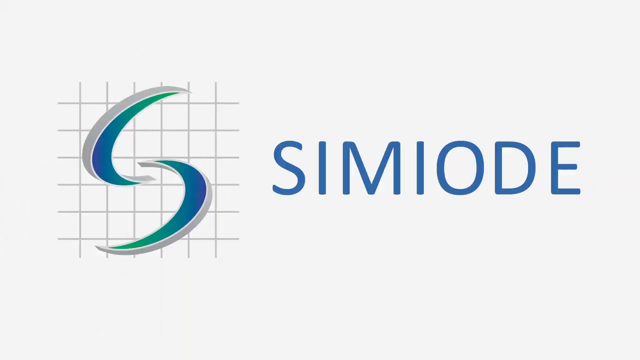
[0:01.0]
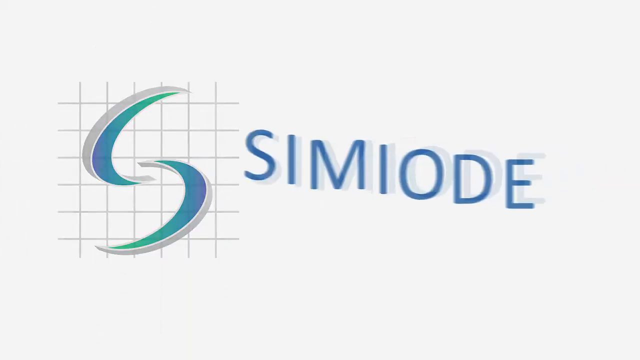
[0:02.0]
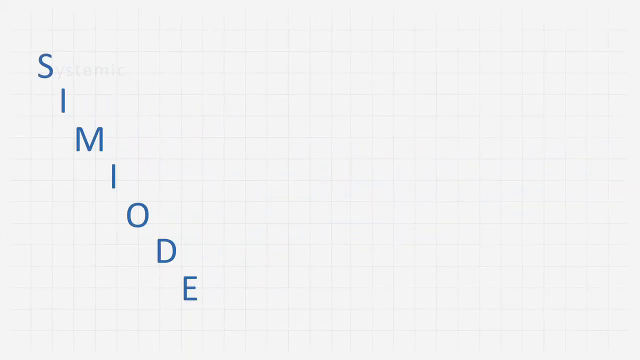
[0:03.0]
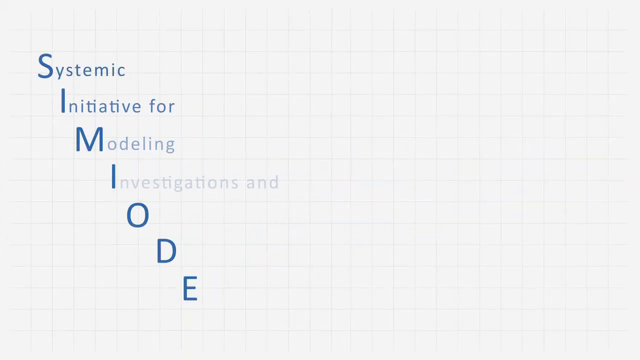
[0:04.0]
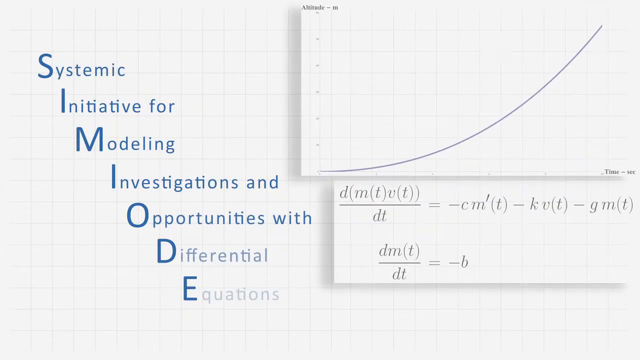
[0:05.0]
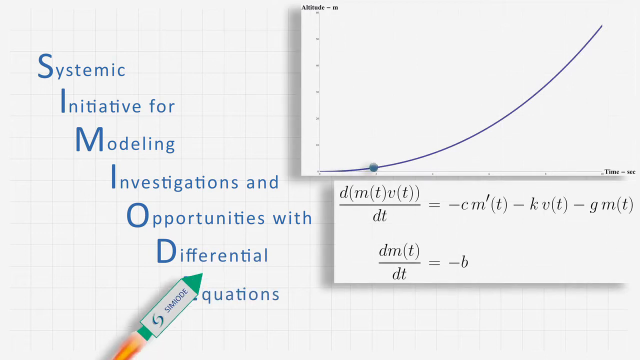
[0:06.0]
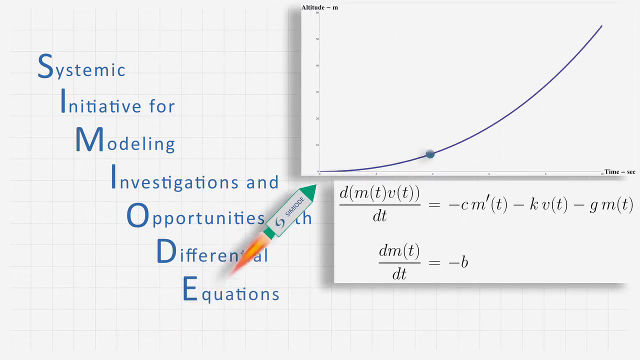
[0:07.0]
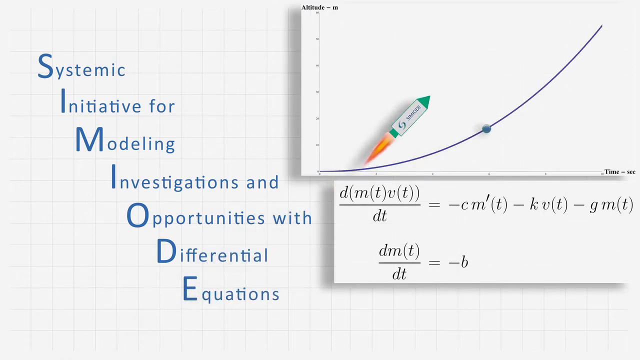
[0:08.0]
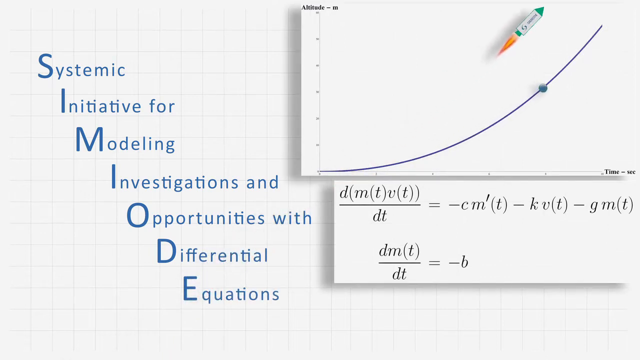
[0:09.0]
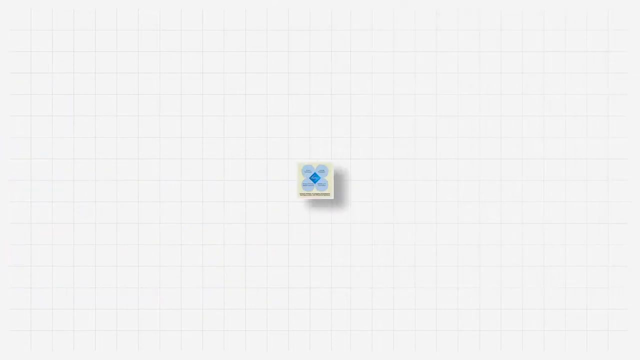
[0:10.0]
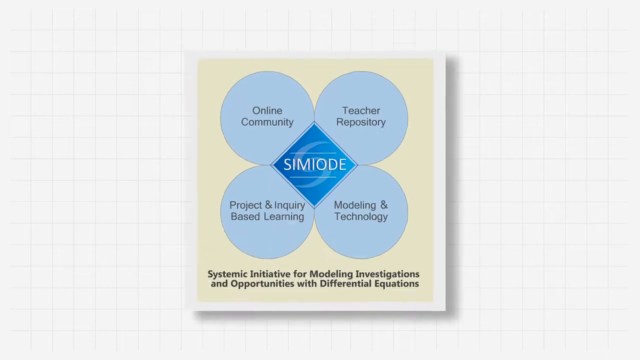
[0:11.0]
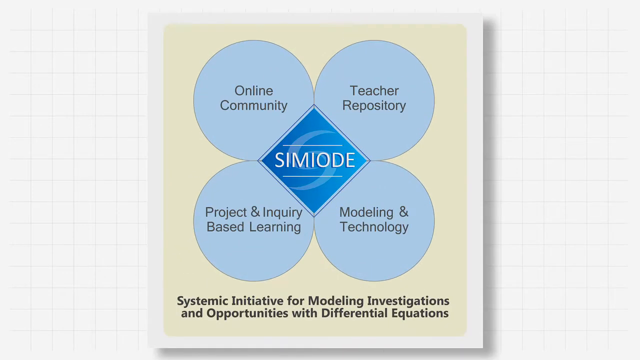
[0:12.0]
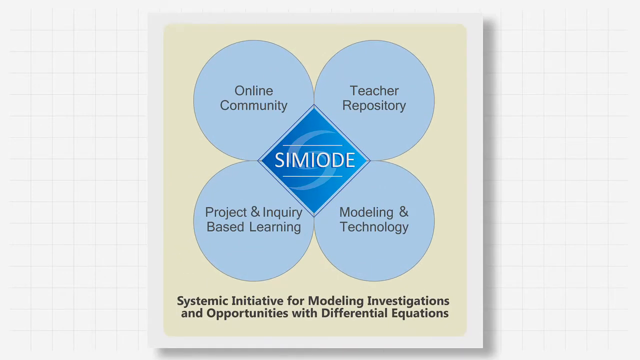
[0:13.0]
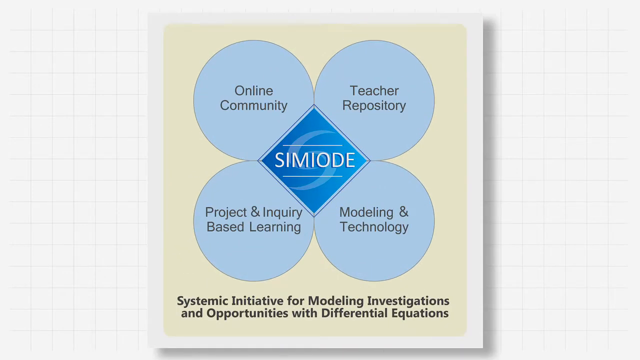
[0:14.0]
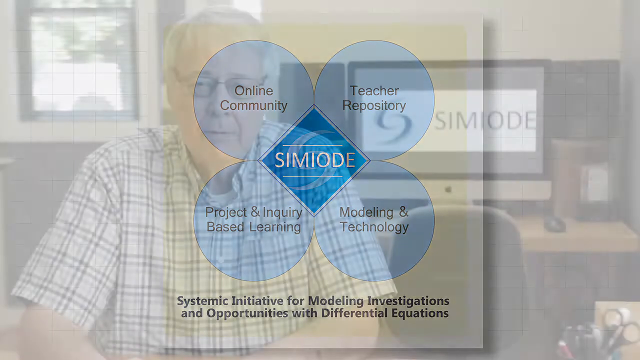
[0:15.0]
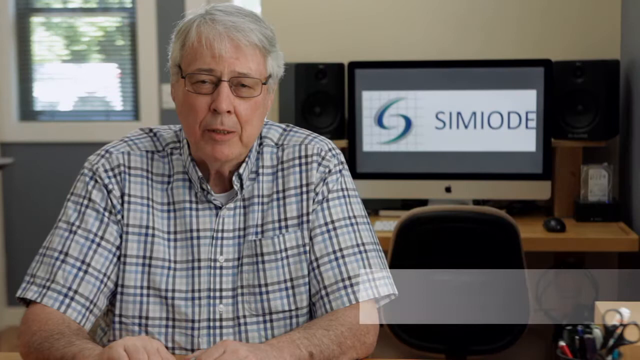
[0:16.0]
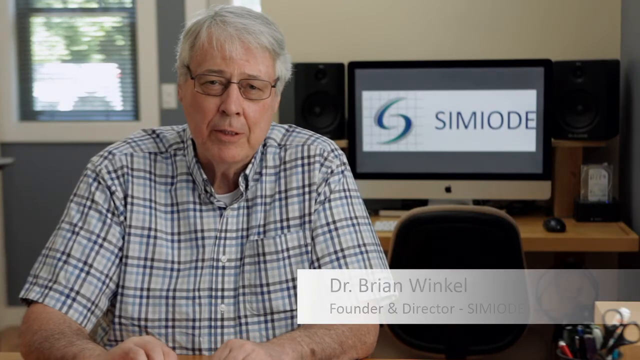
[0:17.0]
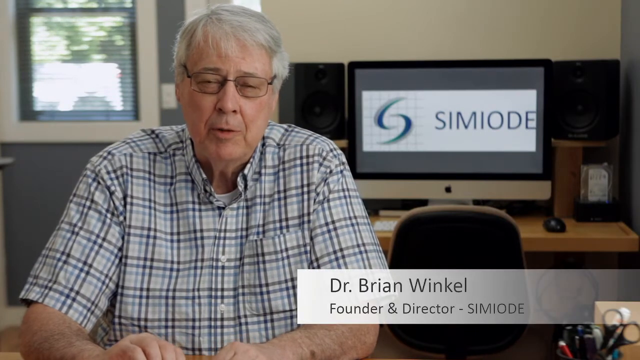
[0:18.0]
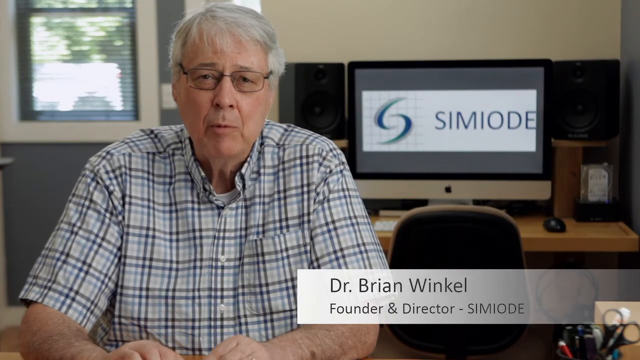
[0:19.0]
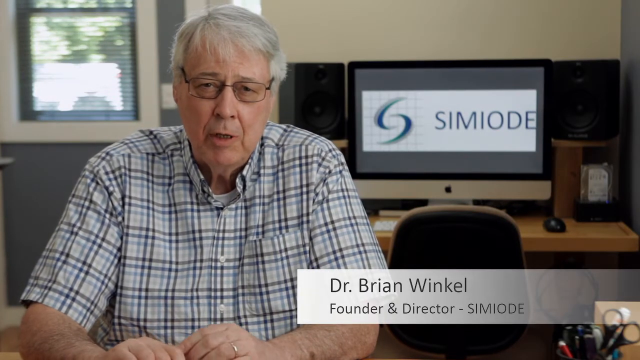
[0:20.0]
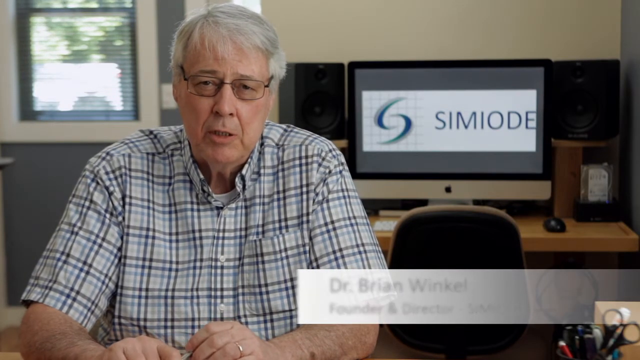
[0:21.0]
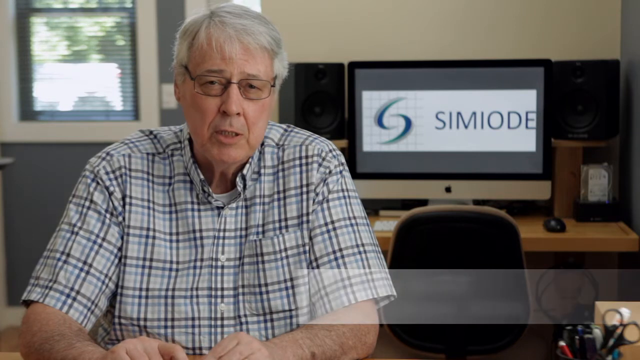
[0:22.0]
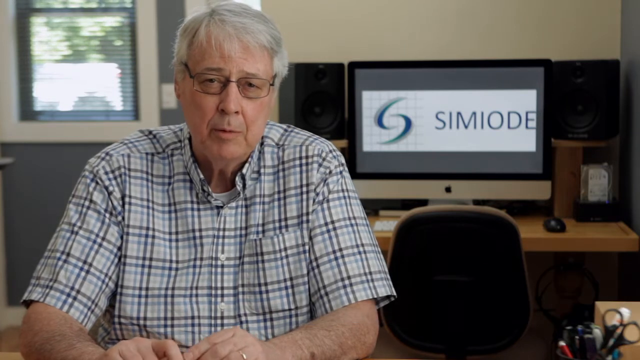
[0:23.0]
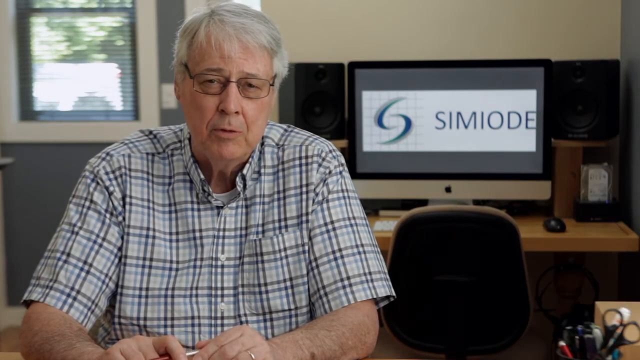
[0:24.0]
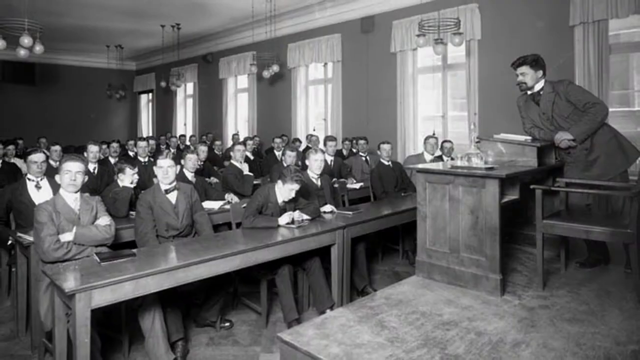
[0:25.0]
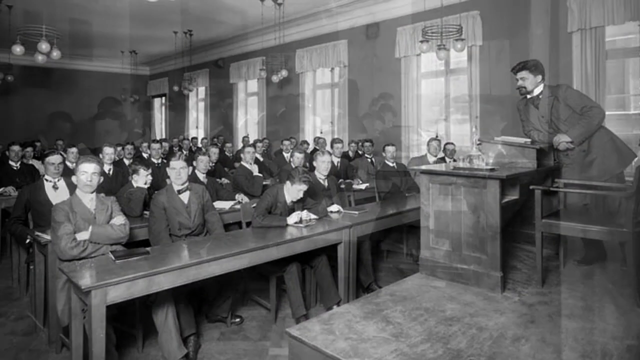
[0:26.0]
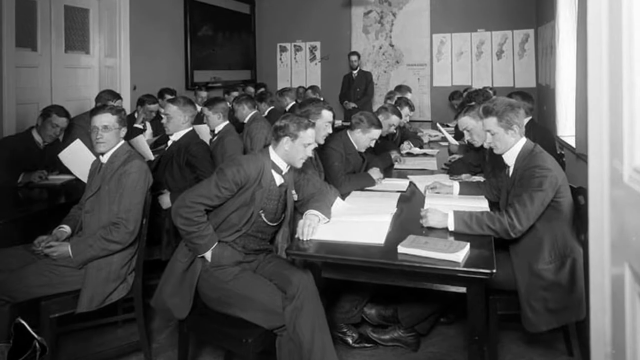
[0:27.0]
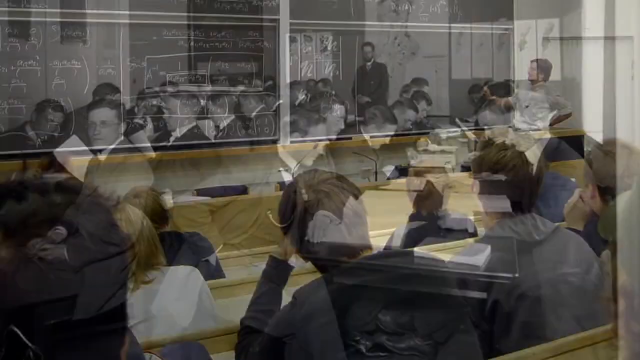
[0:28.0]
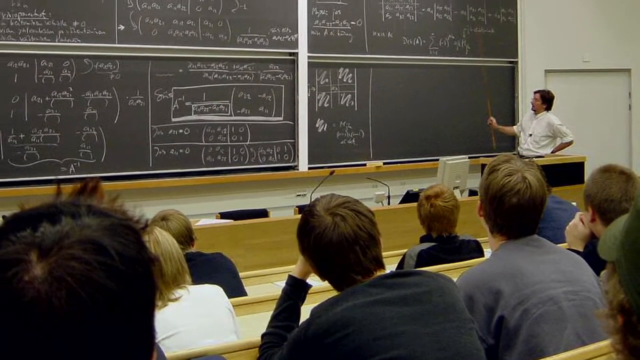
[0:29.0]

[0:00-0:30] The video opens on a wide screen. From the left, crisscrosses appear along with a graphic of an S made of two parts that almost overlap in the center to form an S shape. On the right side of the screen, on a white background, "SIMIODE" appears in blue font. The crisscrosses spread out across the page, leaving a white background with very faint grey squares all the way across. "SIMIODE" is then shown running from the top left on a very slight diagonal toward the bottom of the screen, moving right, with the words formed from its initials: "Systemic Initiative for Modelling Investigations and Opportunities with Differential Equations." The green tip of what looks like a pencil appears toward the bottom left of the screen, just on the horizontal, and a curving line rises up a graph with altitude on the vertical axis and time on the horizontal axis, with an equation in a block below it. The object turns out to be a rocket, not a pencil: it has SIMIODE on its main part, a green tip, a white base and a slightly smaller green protrusion at the bottom, kind of like a tail. From the tail comes a red V with orange inside it, the flame from the back of the rocket. As the rocket flies on a diagonal from roughly the bottom left toward just inside the top right, a ball moves up the curving arc on the graph, and then the screen disappears.